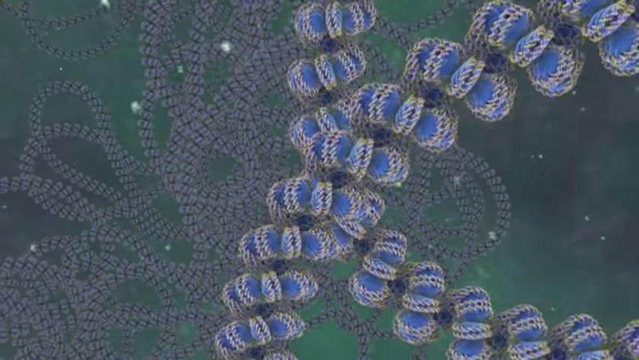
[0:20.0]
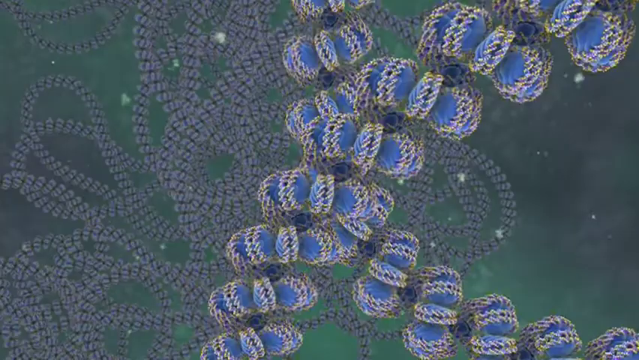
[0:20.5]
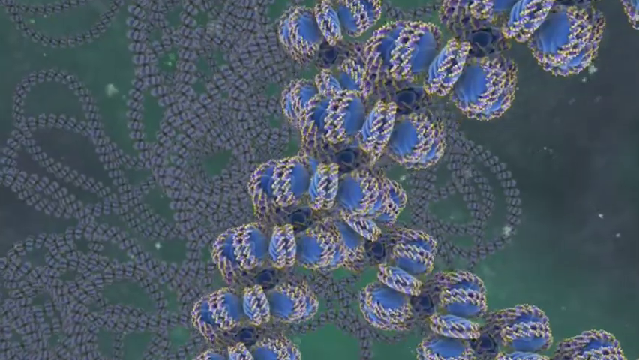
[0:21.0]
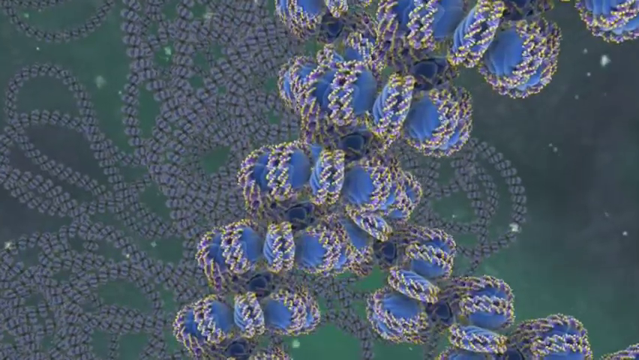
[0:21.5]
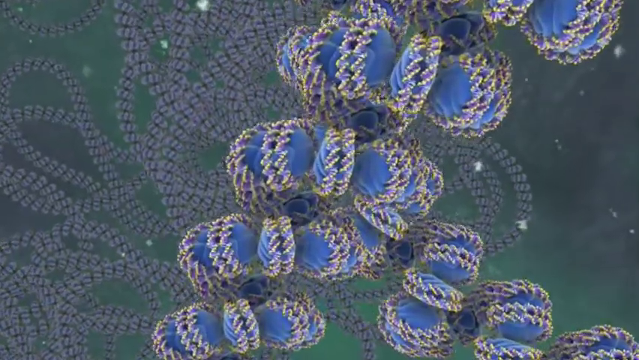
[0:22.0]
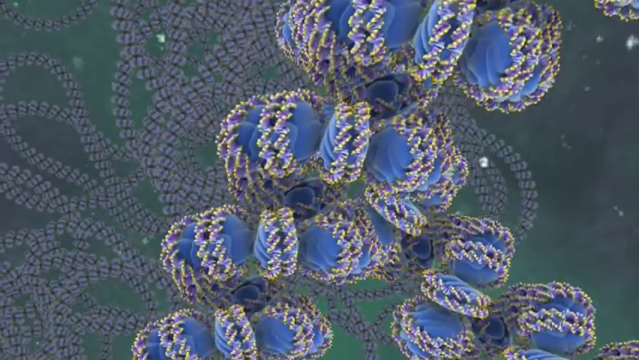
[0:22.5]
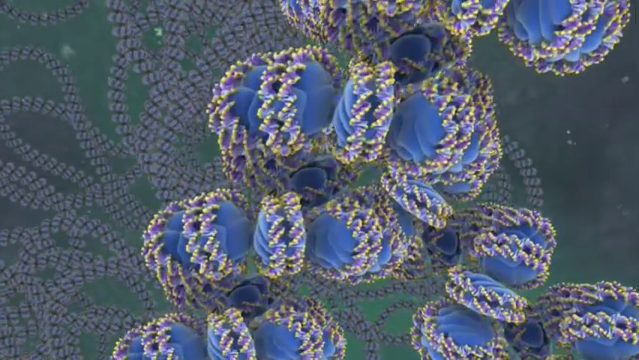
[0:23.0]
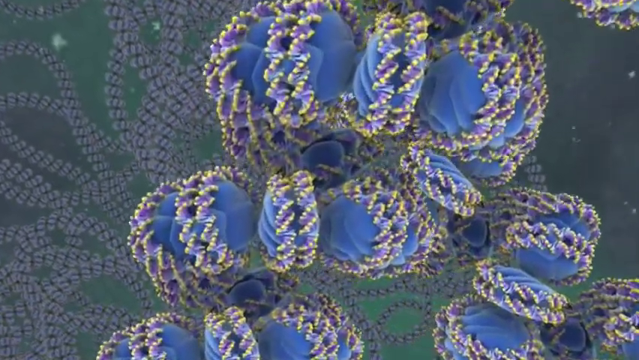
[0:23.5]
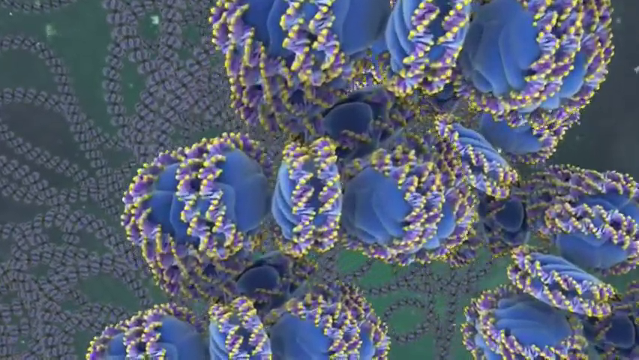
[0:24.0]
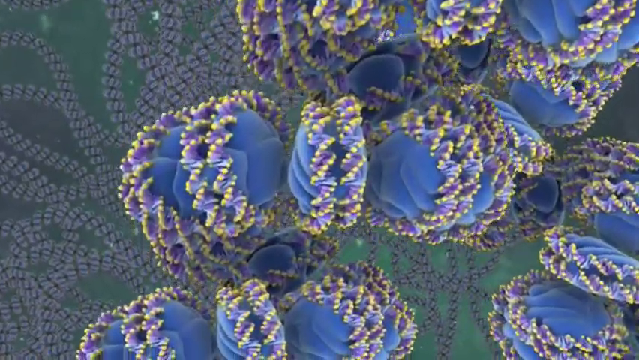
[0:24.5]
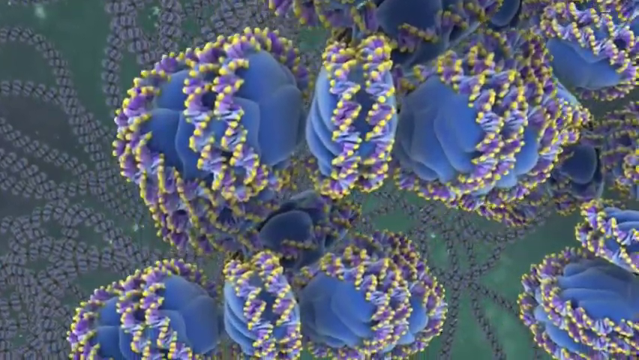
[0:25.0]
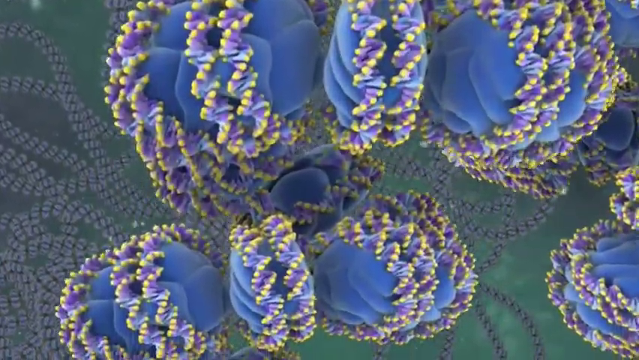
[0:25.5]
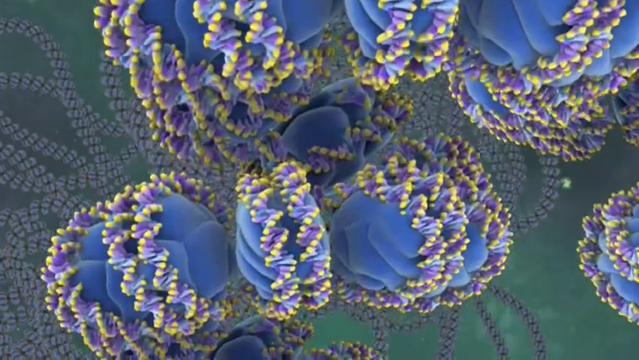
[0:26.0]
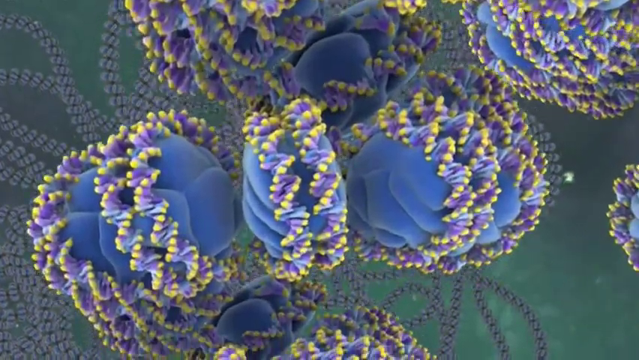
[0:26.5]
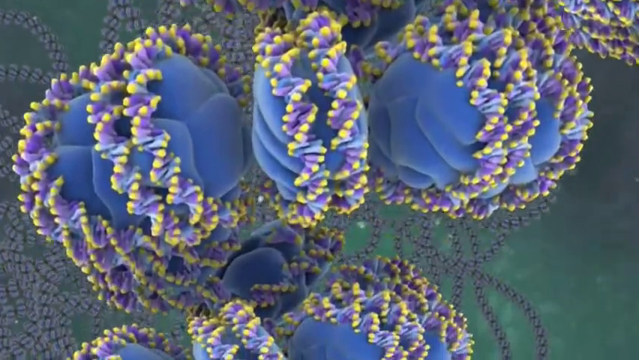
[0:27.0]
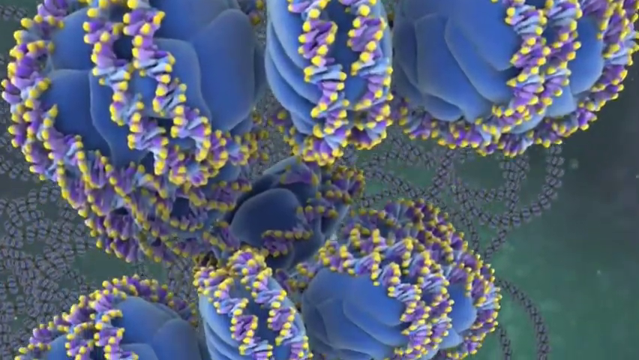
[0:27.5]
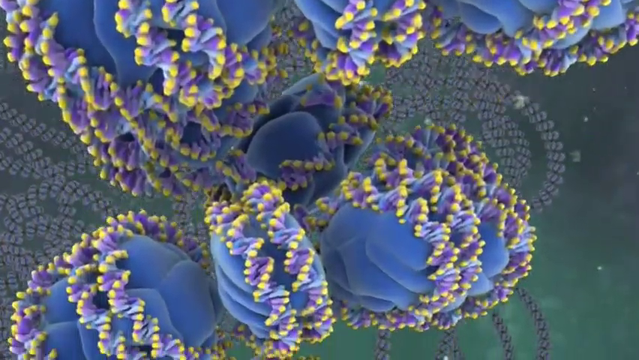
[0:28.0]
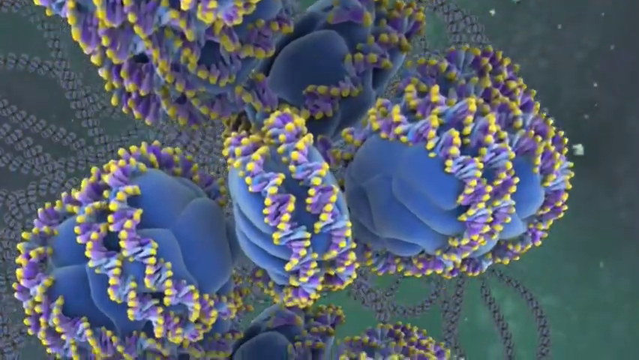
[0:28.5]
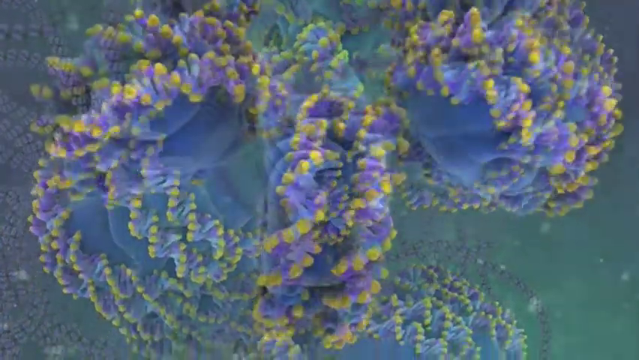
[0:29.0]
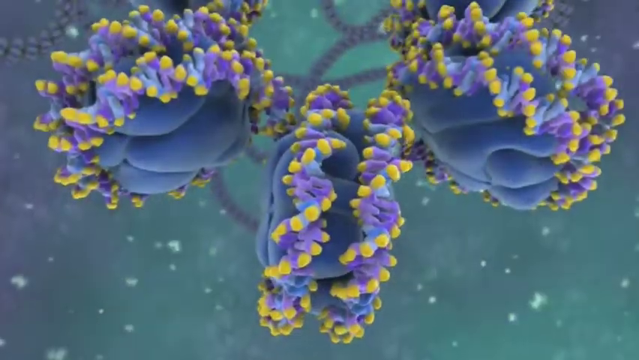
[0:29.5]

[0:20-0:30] The scene changes to what looks like some kind of DNA structure, perhaps. It is complex and intertwined, mainly blue, with purple and gold spirals wrapping around each individual component. It almost looks like a long intertwining blue rope with little blue circles attached to each side, scattered along the rope, with both the rope and the circles covered in a thin purple and gold layer wrapping around them. The shot starts from kind of a far-away view and zooms in, gradually getting very close to the structure. It is unclear exactly what the structure is.